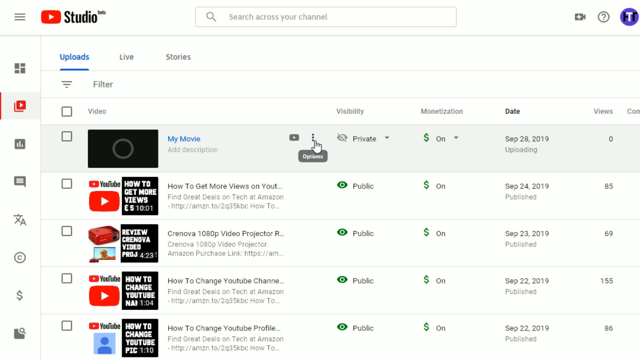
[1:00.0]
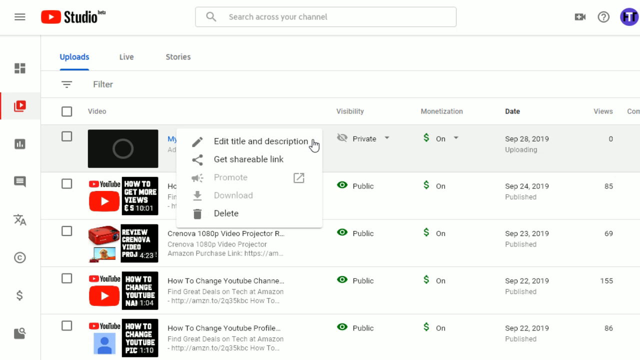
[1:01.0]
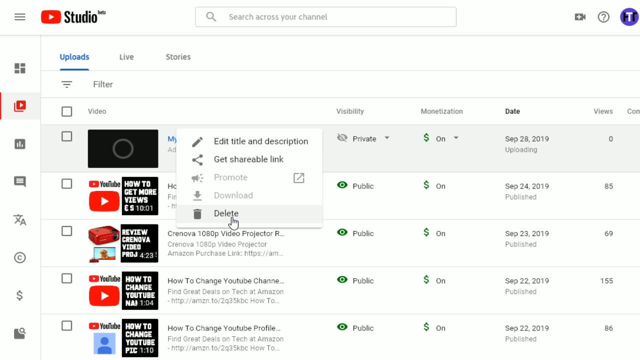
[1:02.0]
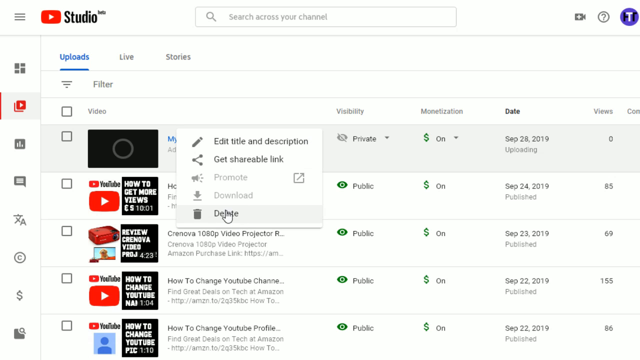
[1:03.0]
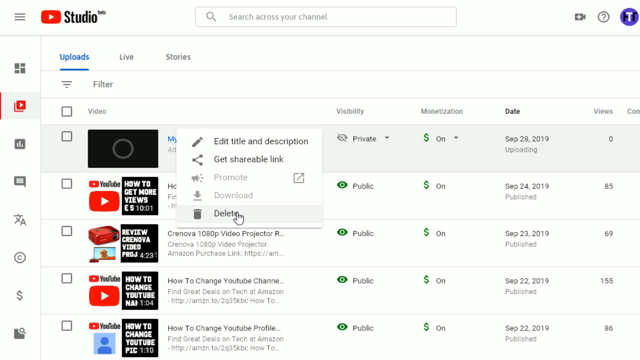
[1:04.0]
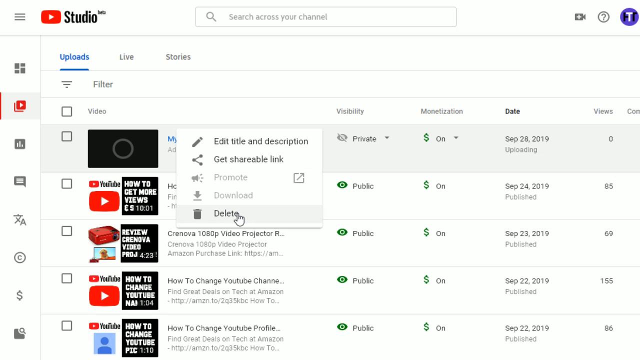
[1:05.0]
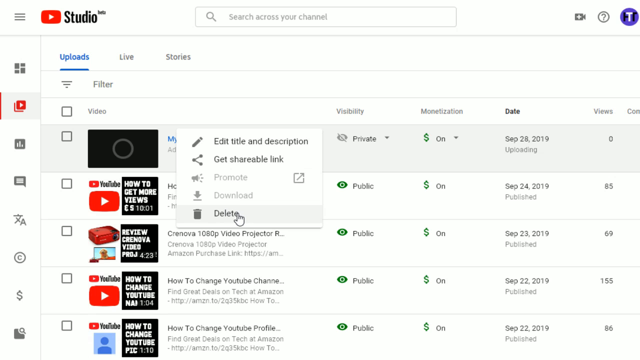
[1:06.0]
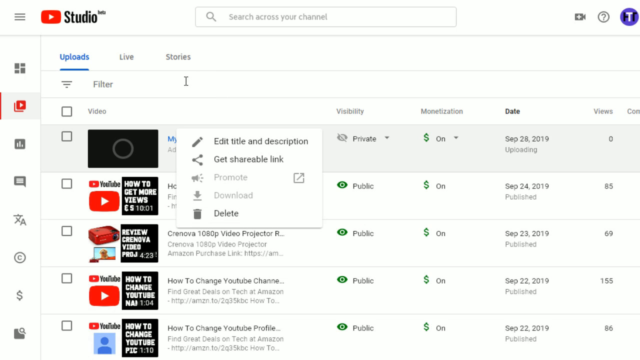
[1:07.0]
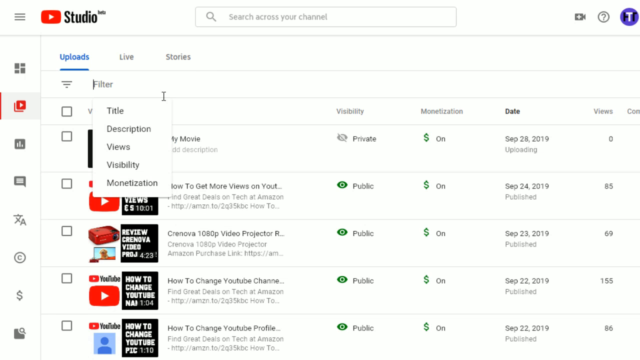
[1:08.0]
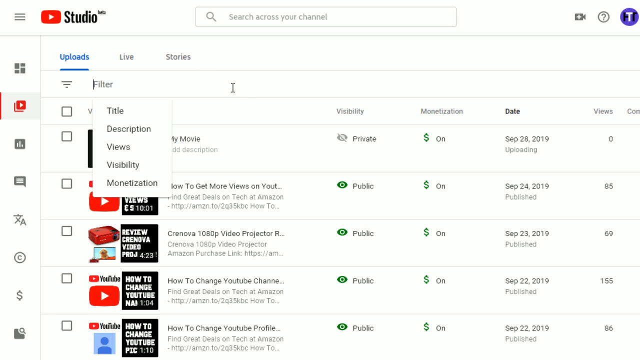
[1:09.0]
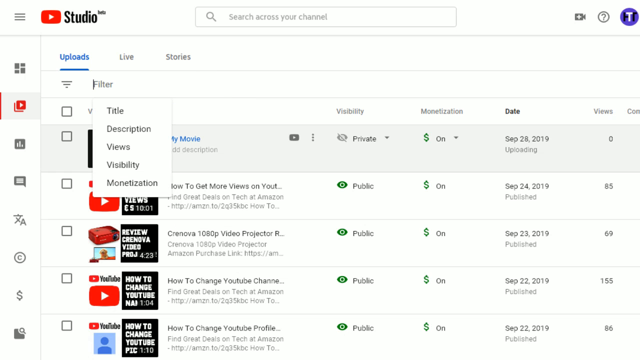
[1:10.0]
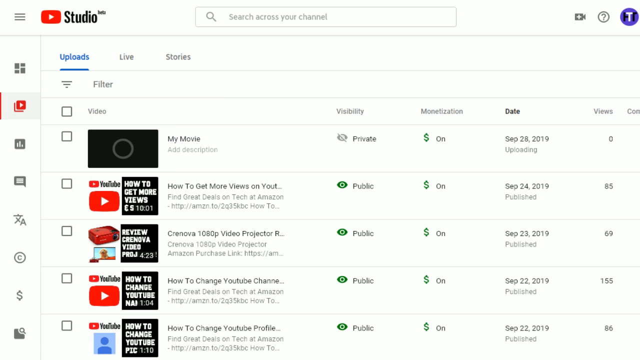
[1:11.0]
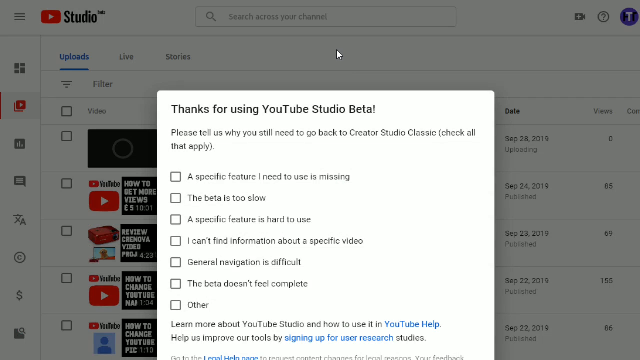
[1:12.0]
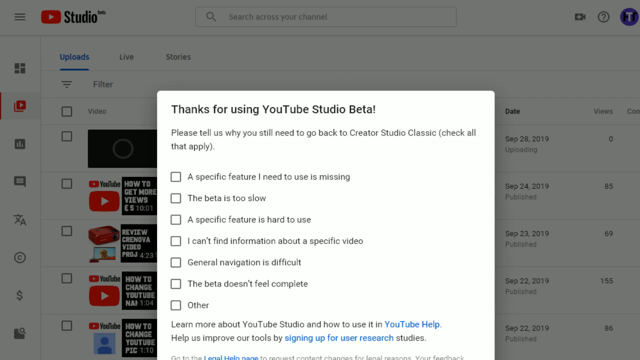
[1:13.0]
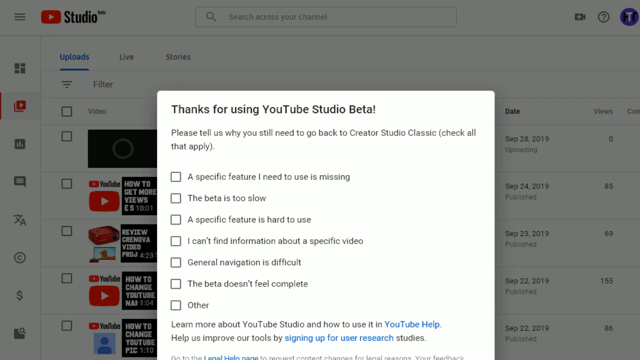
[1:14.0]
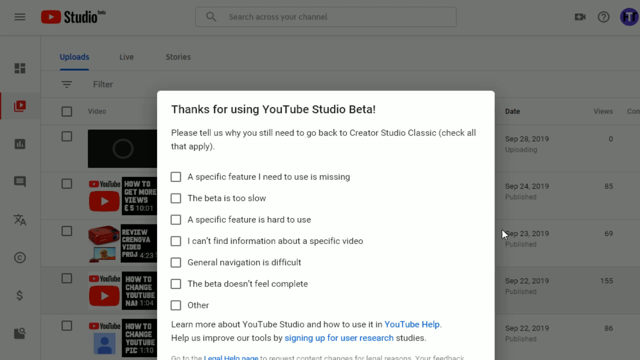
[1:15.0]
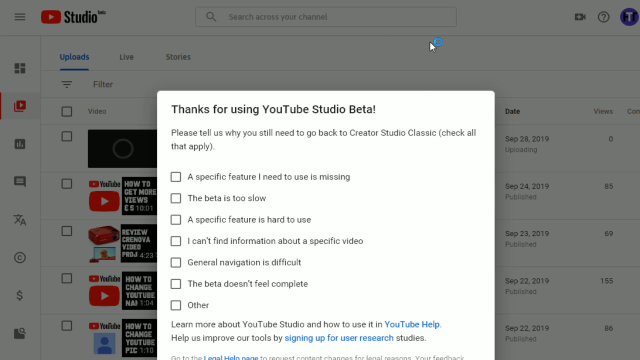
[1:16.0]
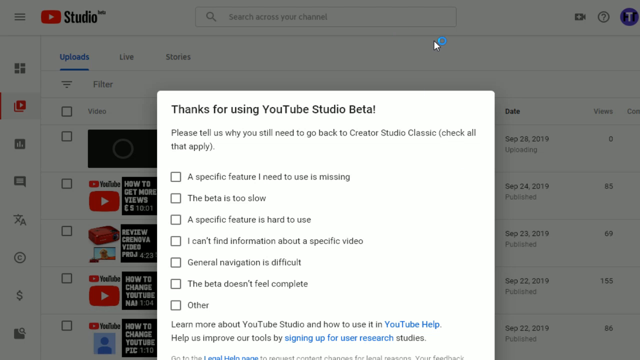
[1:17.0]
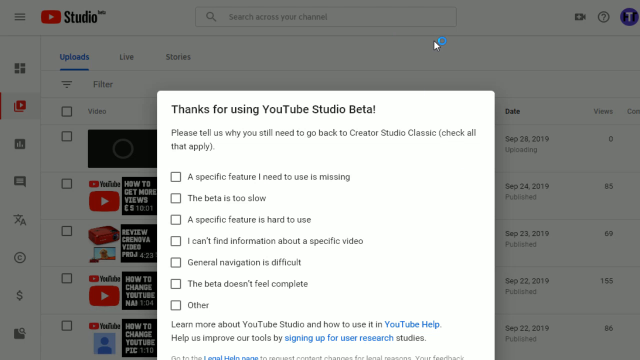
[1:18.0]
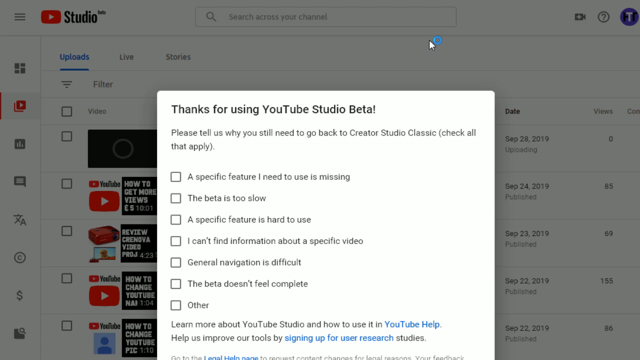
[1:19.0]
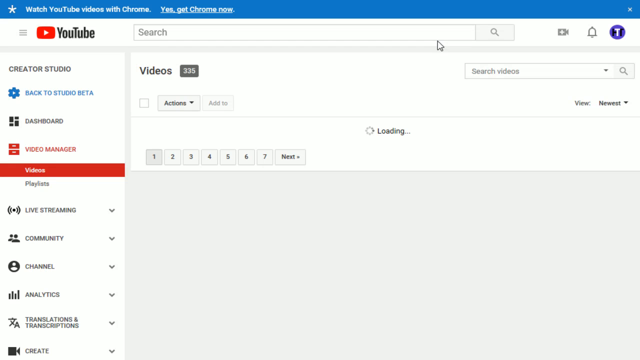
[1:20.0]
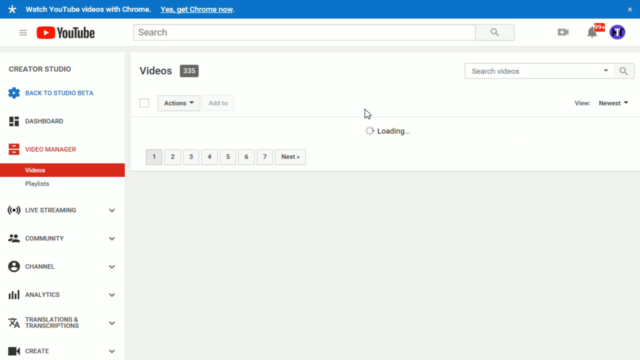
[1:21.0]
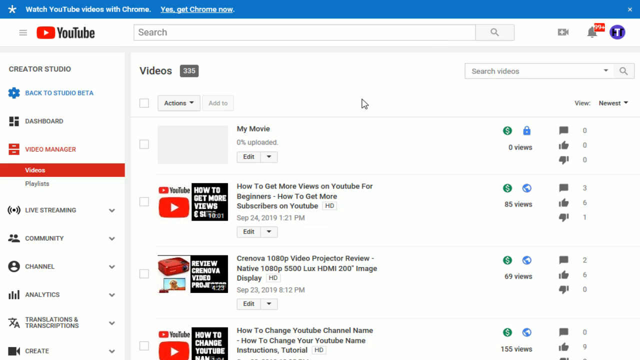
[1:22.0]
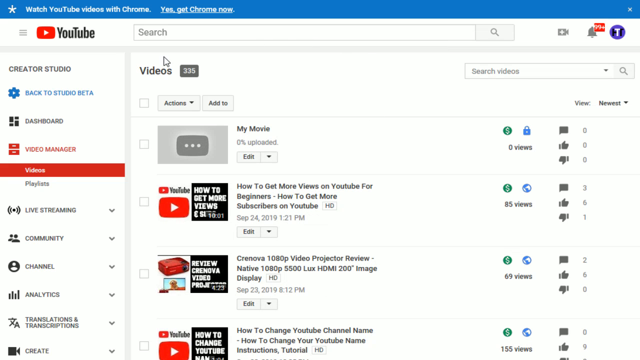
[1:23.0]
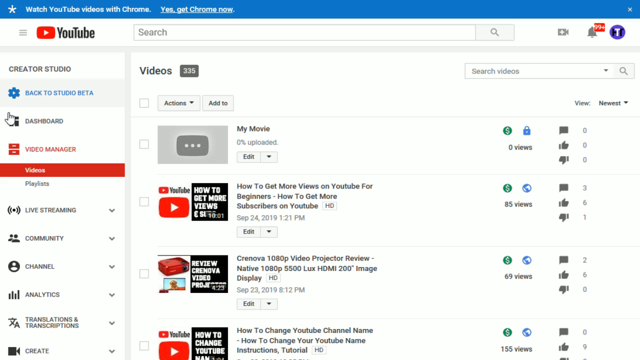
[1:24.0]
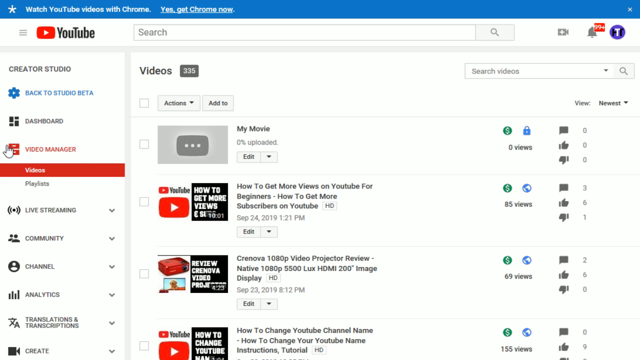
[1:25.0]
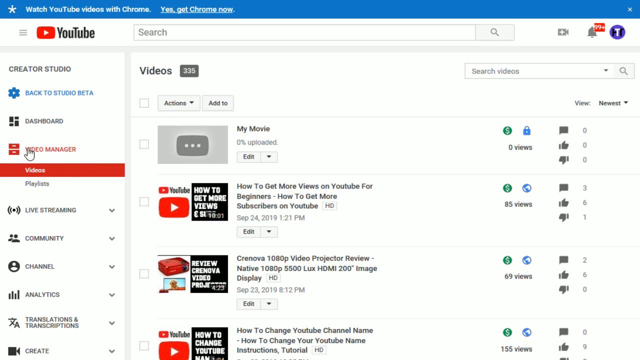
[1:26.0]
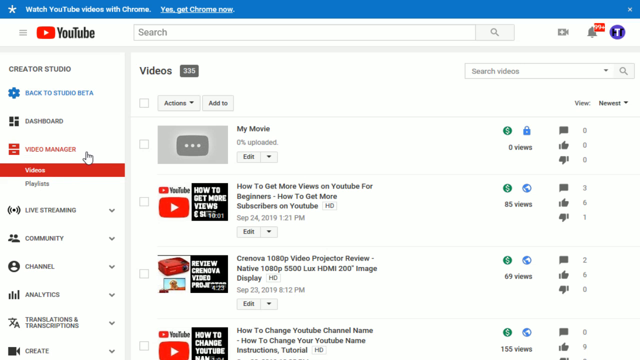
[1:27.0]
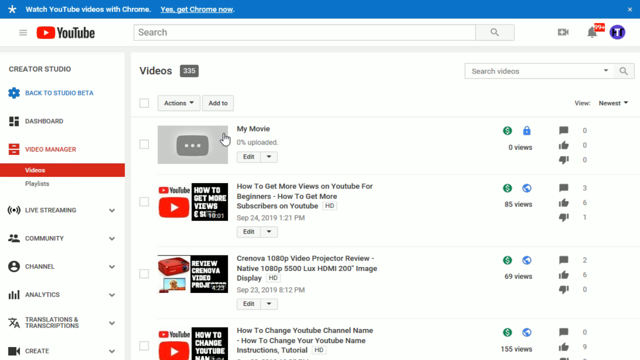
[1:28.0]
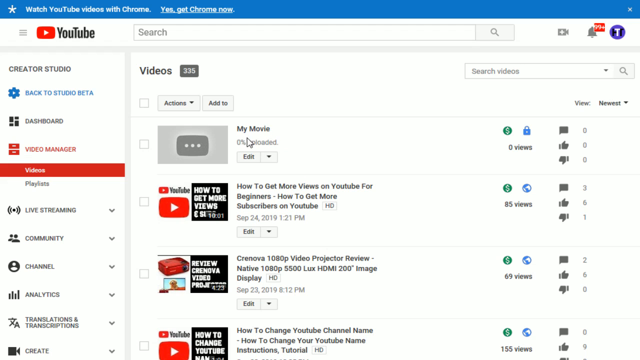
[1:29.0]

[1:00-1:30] The cursor continues hovering over the three dots on the YouTube Studio page, then clicks them and hovers over the delete button. Instead of clicking delete, it clicks out, and a pop-up appears that says "thanks for using the YouTube Studio Beta. Please tell us why you still need to go back to the Creator Classics and check all that apply." A loading icon appears next to the cursor, and then the YouTube Studio Videos Manager page is shown with video information, including views and upload time. No people or animals are visible; the only change is the switch to this page after the pop-up is closed.